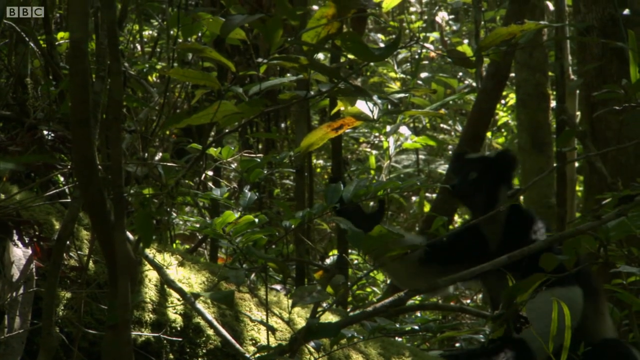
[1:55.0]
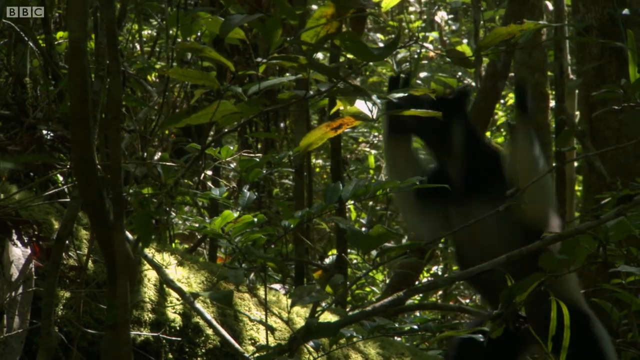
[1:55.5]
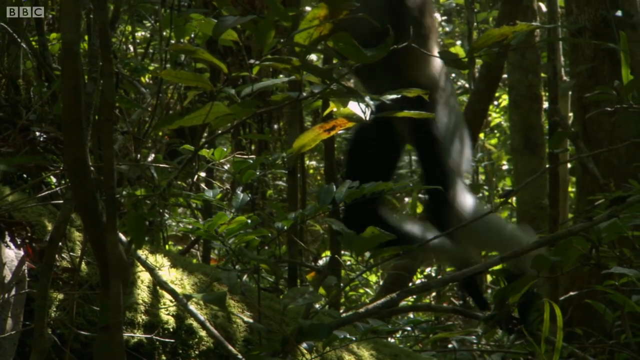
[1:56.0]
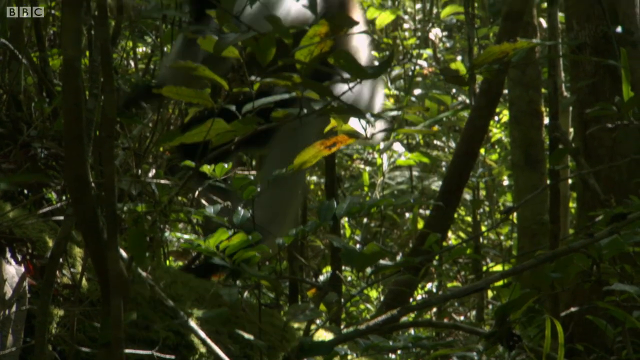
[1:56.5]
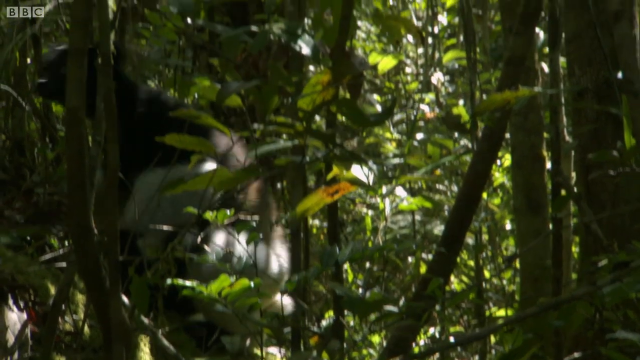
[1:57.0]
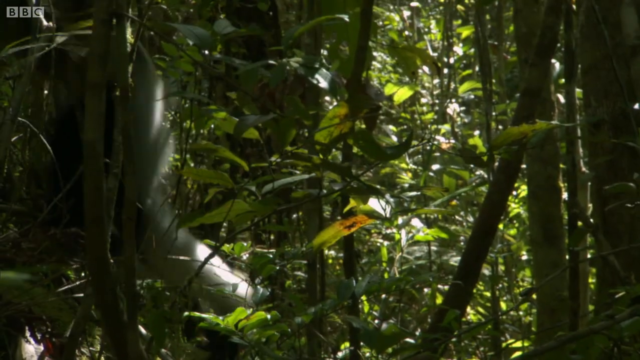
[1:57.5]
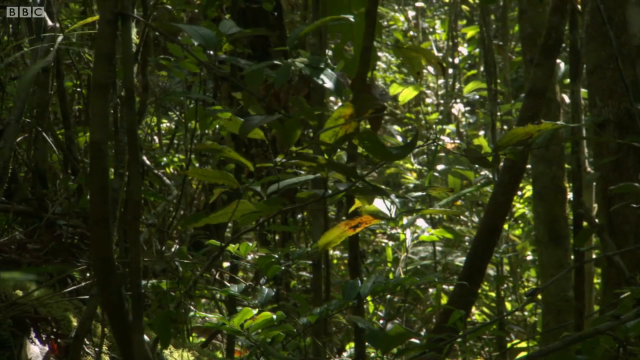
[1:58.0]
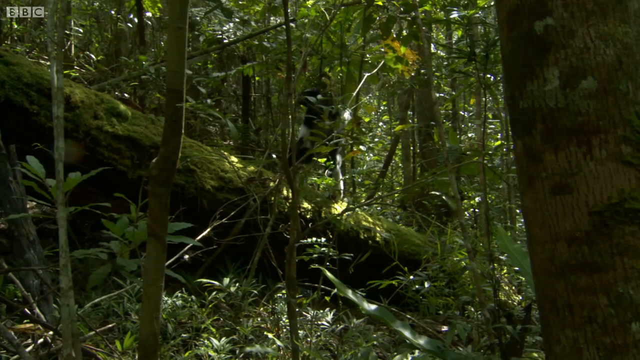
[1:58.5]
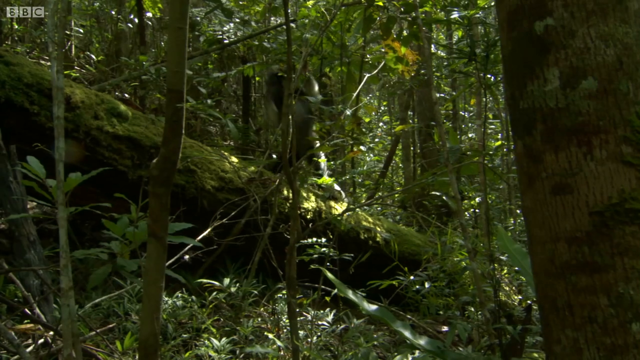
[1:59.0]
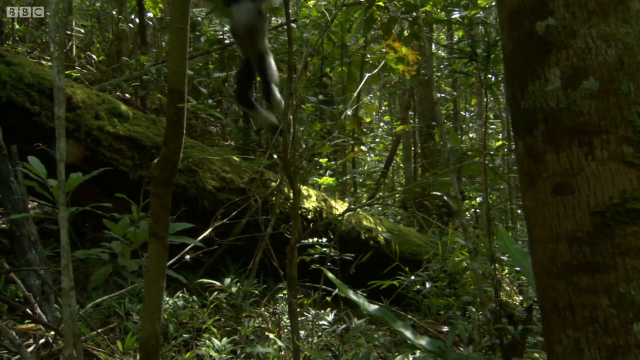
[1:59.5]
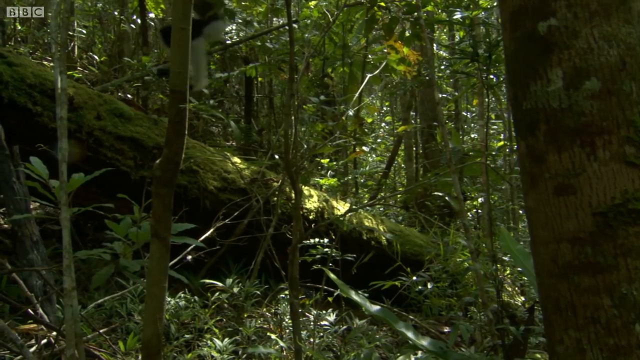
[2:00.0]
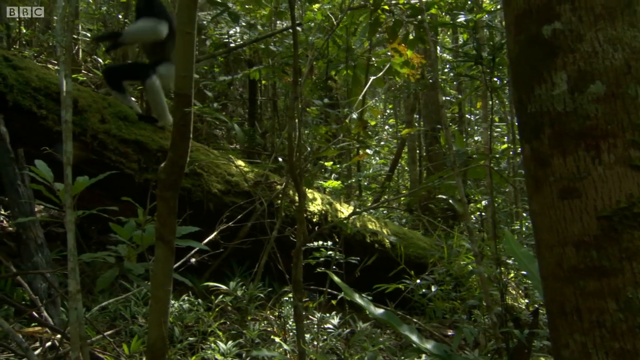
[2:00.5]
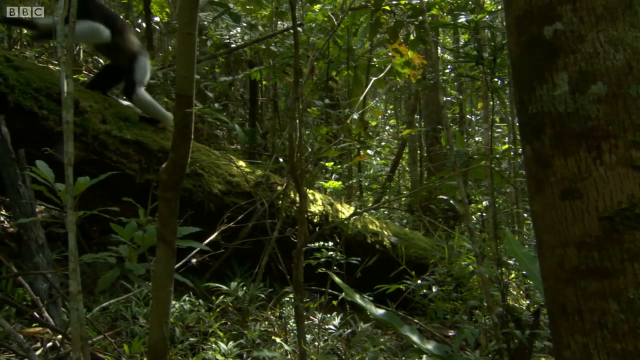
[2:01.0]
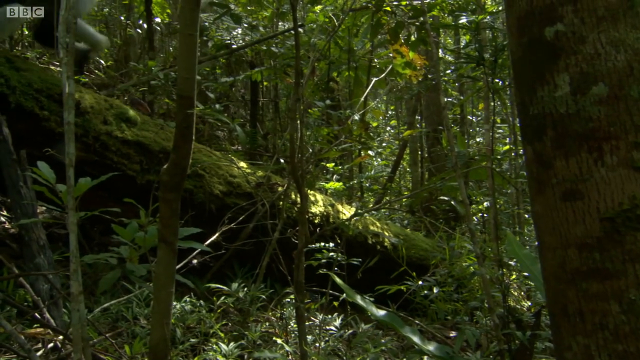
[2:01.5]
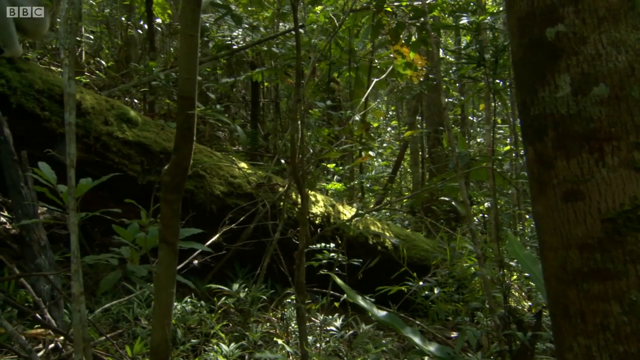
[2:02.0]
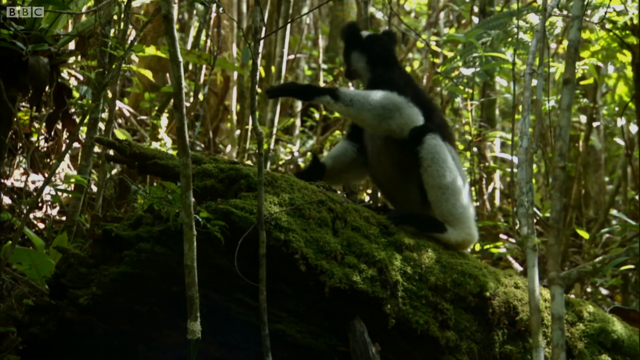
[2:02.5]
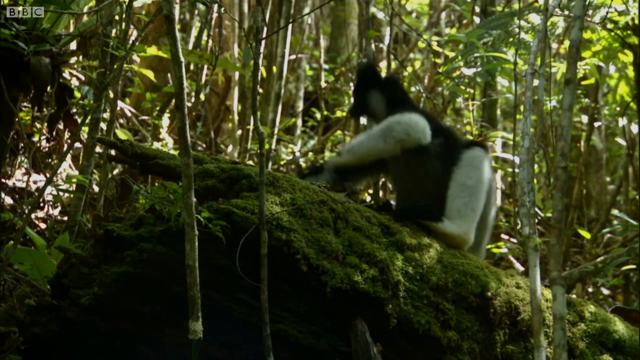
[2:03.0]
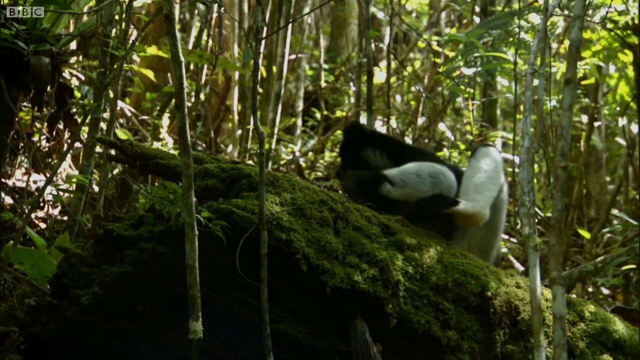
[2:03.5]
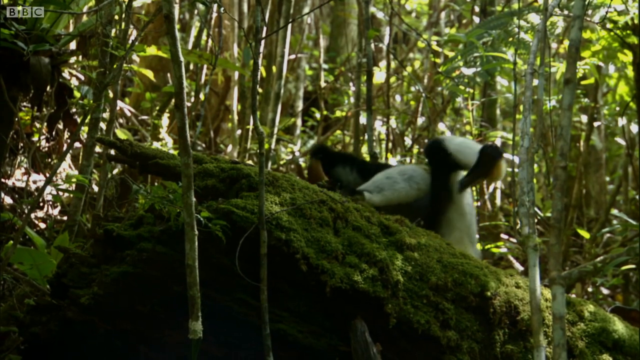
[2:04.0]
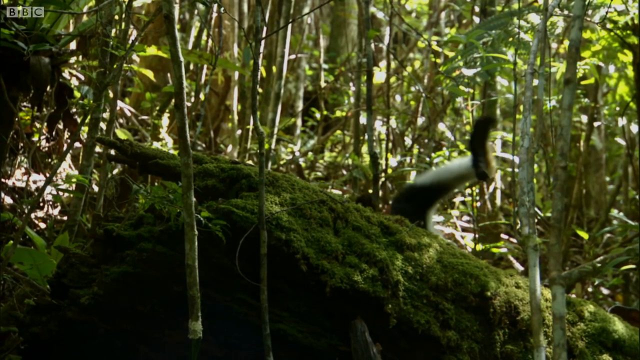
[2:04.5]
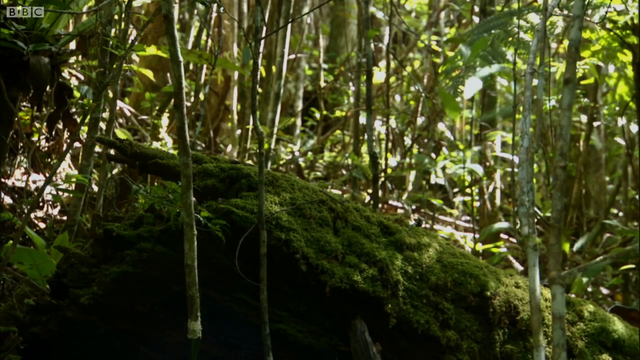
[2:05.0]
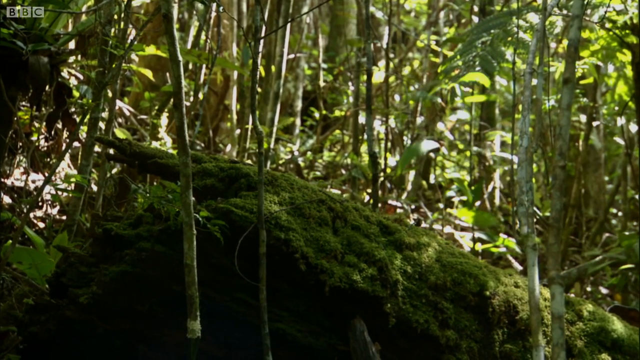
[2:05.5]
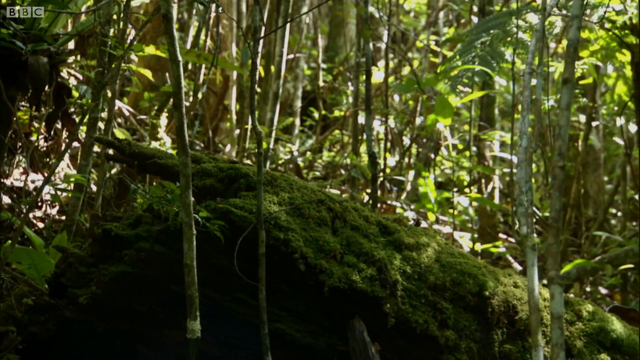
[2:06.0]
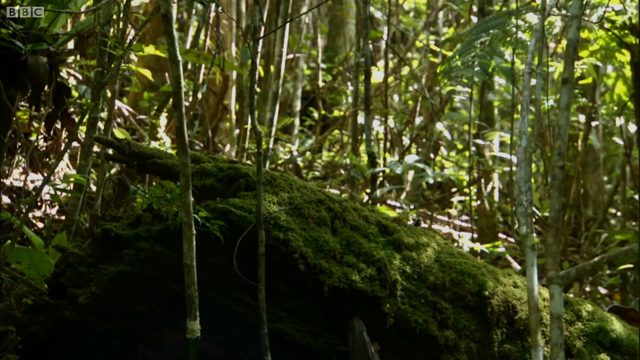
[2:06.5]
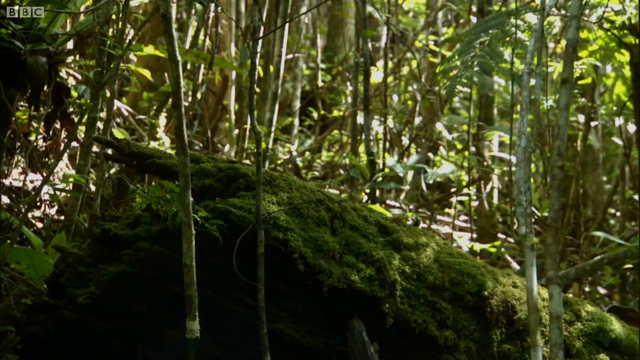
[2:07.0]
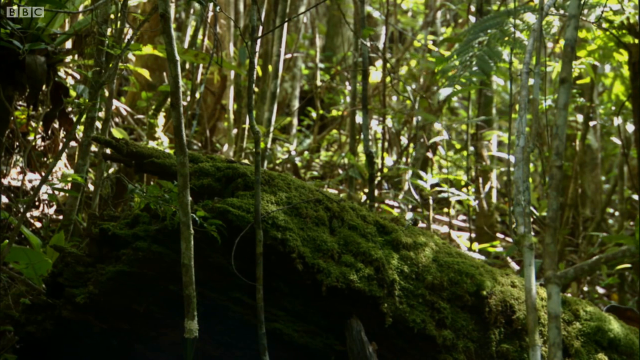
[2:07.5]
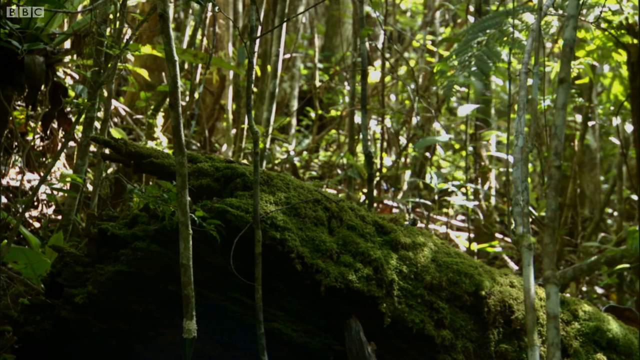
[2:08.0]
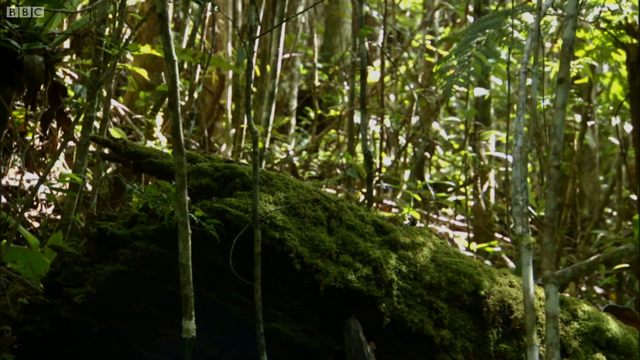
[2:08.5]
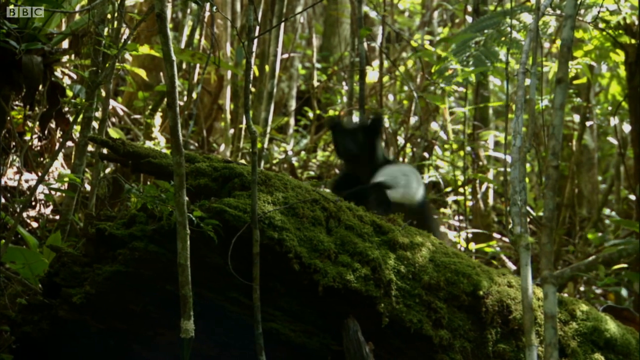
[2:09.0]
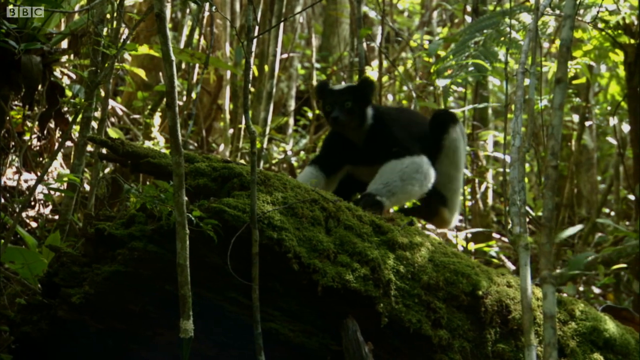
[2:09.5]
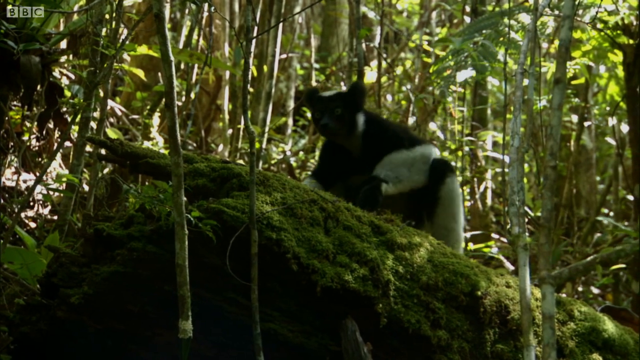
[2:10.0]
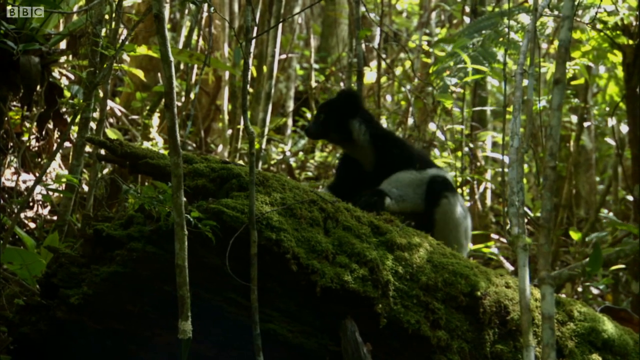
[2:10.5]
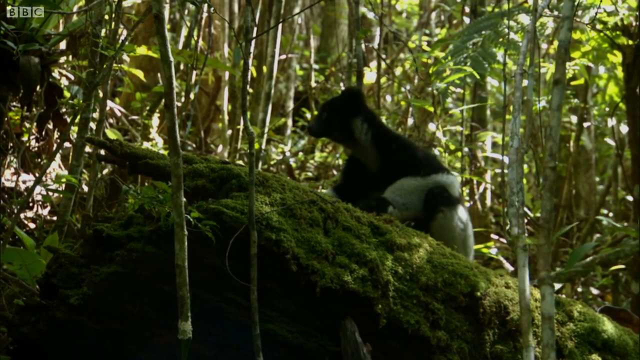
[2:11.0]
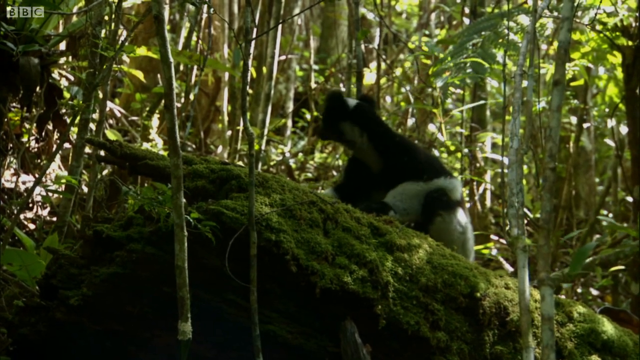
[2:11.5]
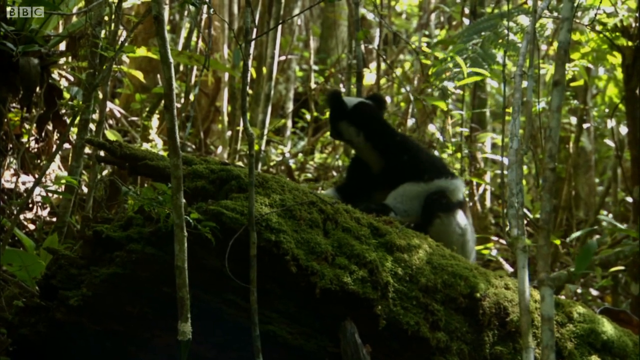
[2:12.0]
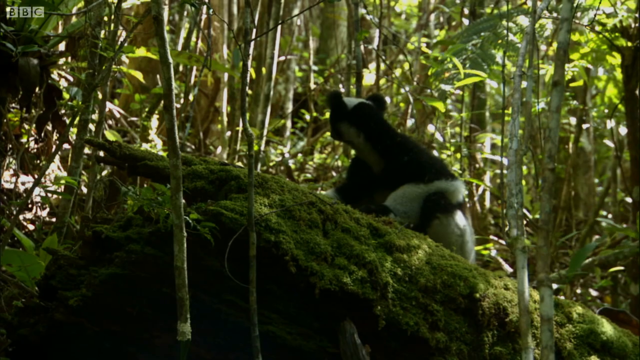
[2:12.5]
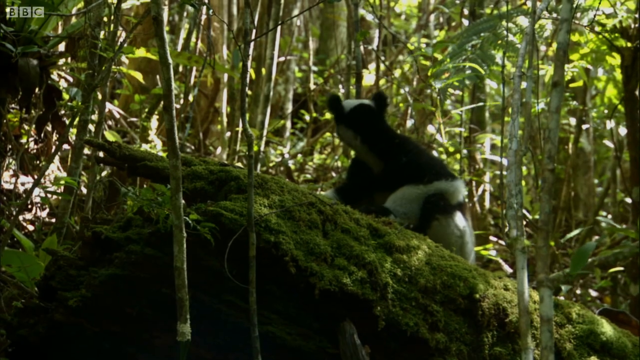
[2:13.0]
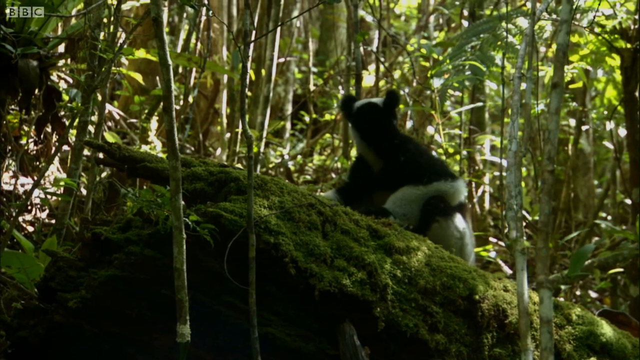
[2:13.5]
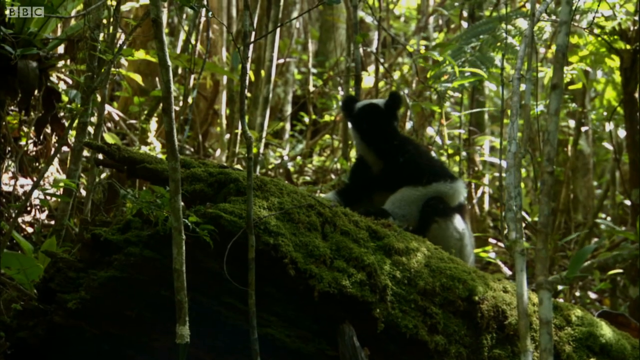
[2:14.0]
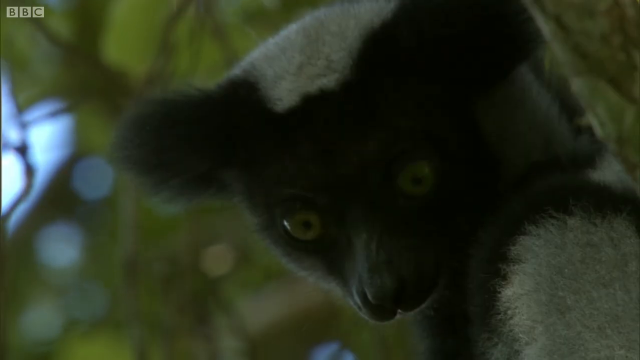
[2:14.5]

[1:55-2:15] In a densely packed green forest with lemurs, a lemur jumps from tree to tree, then onto the forest floor and onto a moss-covered log. It moves across the forest floor by hopping along the log. At one point it falls off the log, and the branches where it lands move with the disturbance. It jumps back onto the log and moves its head around. A close-up then shows a lemur's face, possibly the same lemur or another one, with kind of a puzzled look, green eyes and a black and white face.